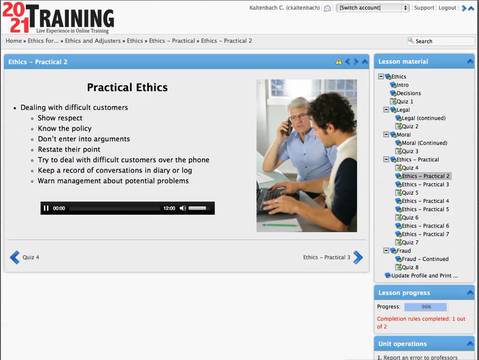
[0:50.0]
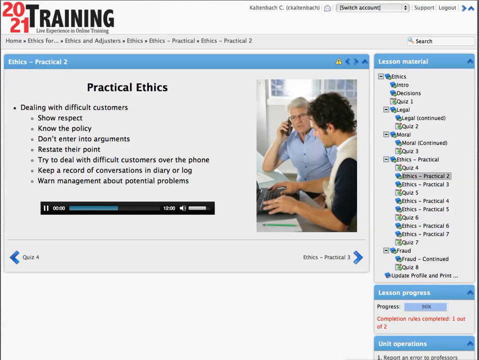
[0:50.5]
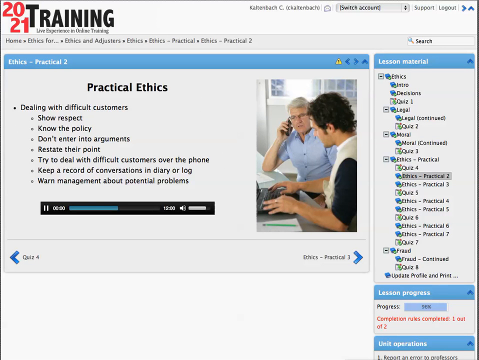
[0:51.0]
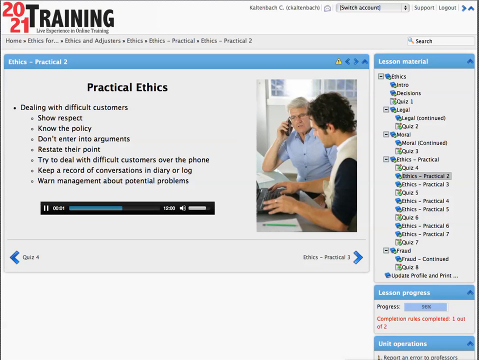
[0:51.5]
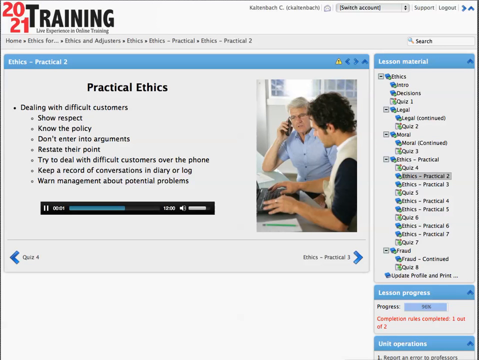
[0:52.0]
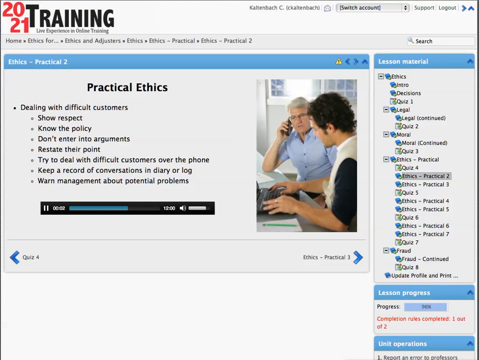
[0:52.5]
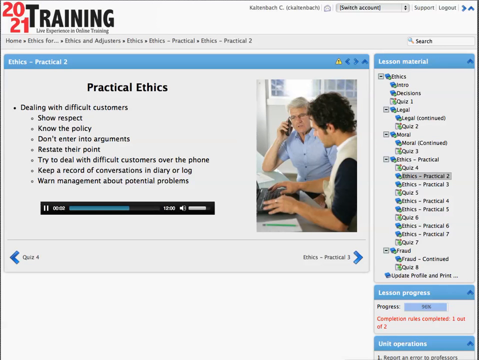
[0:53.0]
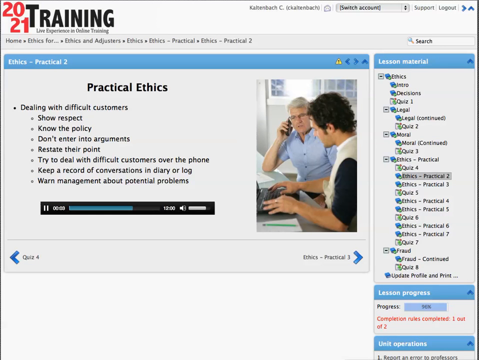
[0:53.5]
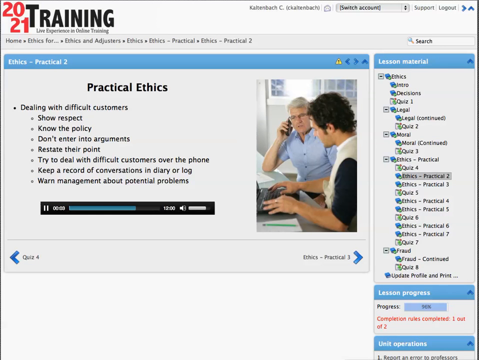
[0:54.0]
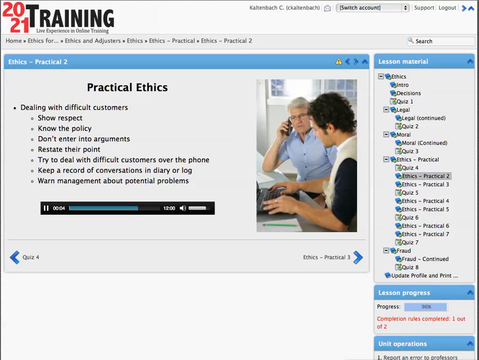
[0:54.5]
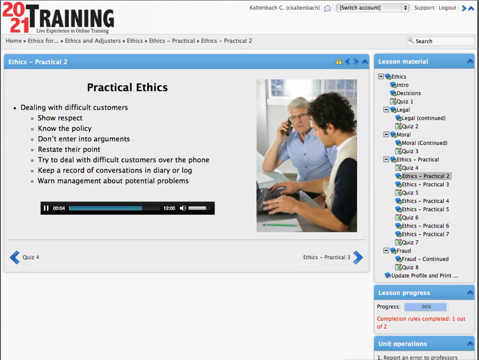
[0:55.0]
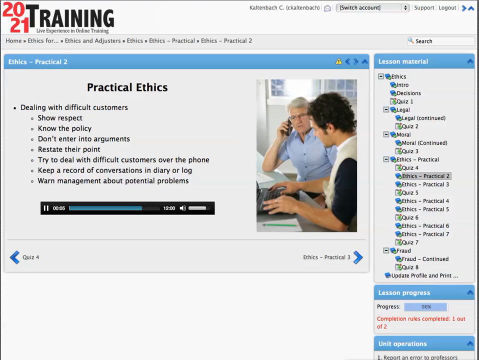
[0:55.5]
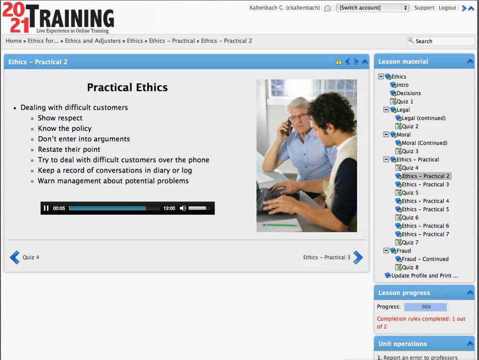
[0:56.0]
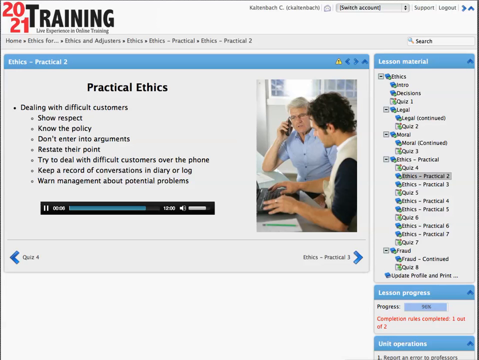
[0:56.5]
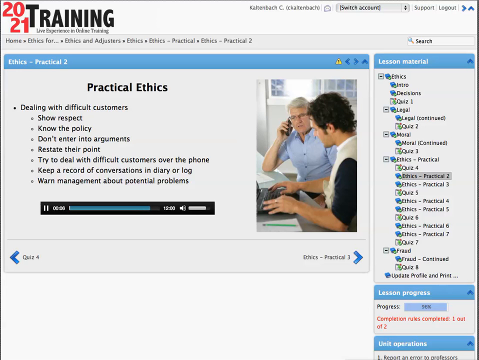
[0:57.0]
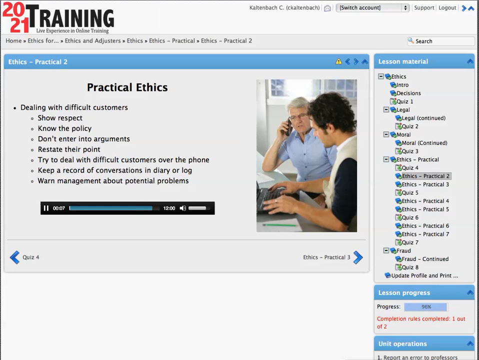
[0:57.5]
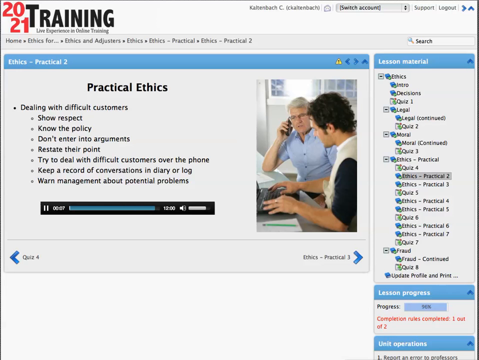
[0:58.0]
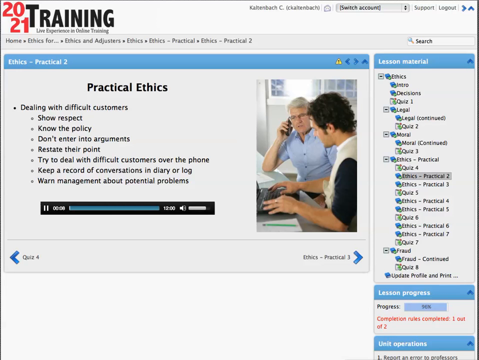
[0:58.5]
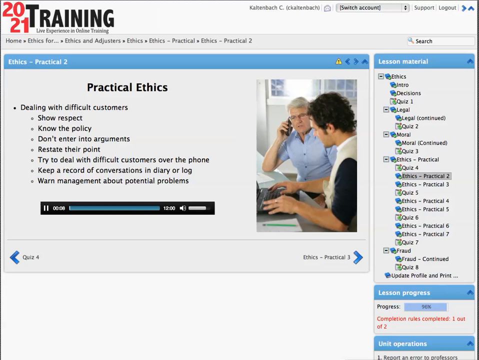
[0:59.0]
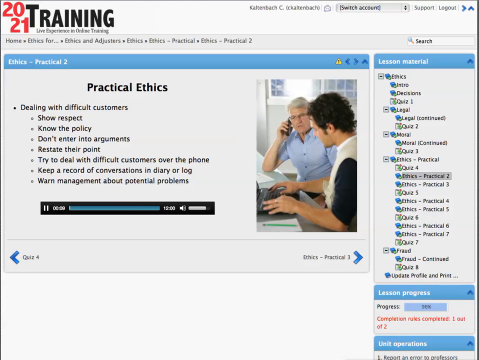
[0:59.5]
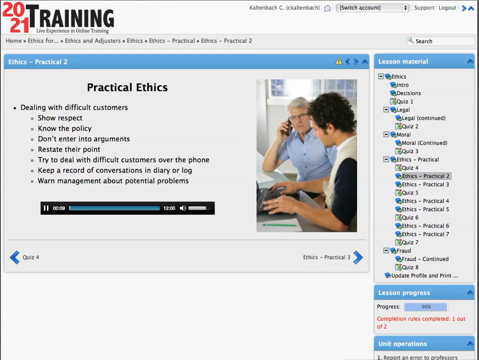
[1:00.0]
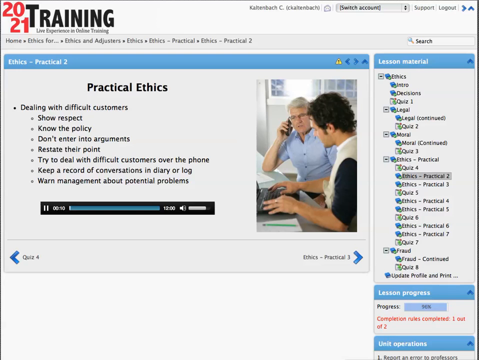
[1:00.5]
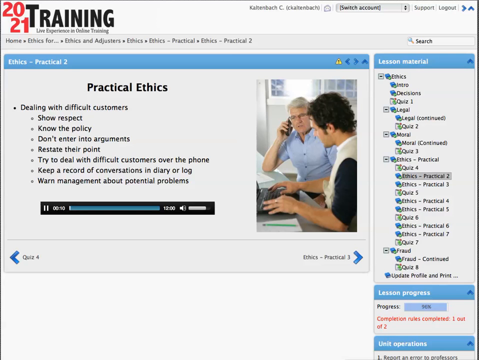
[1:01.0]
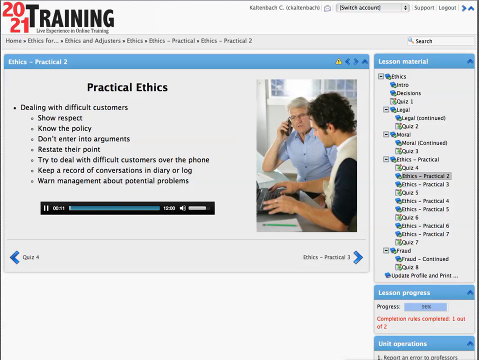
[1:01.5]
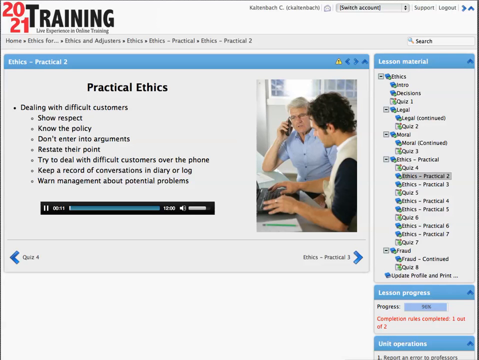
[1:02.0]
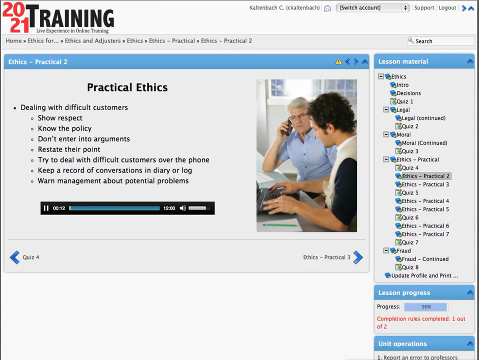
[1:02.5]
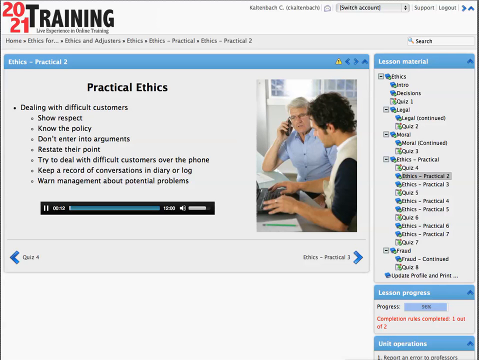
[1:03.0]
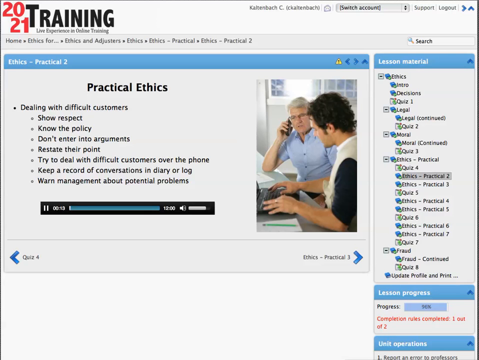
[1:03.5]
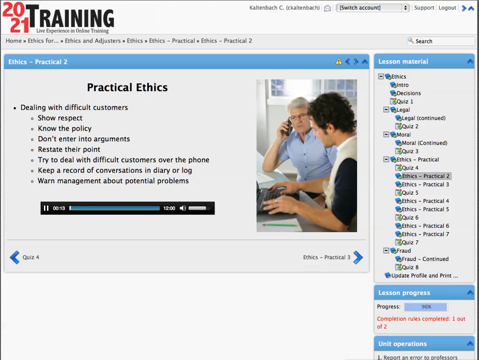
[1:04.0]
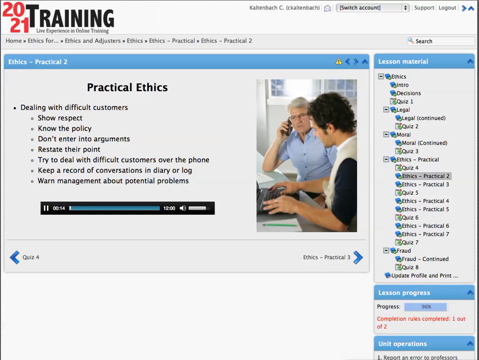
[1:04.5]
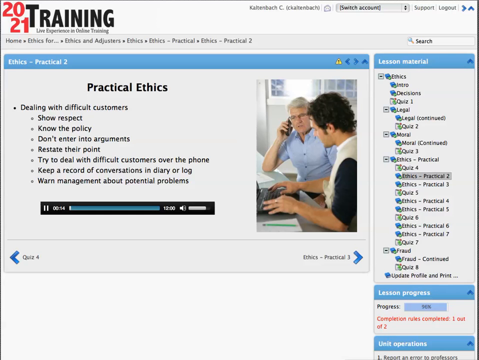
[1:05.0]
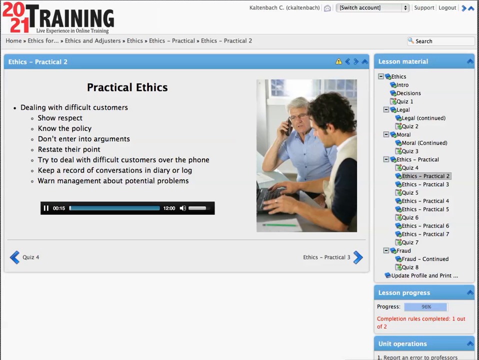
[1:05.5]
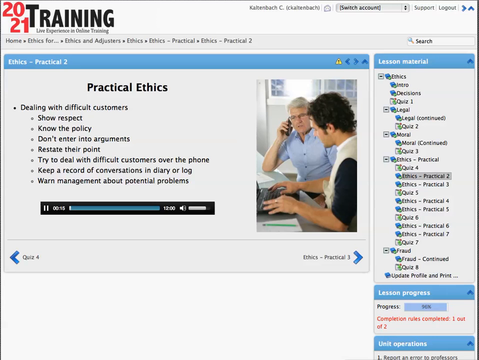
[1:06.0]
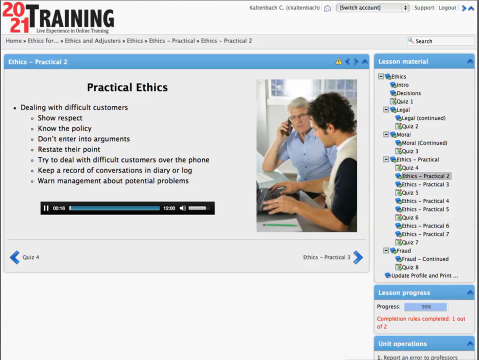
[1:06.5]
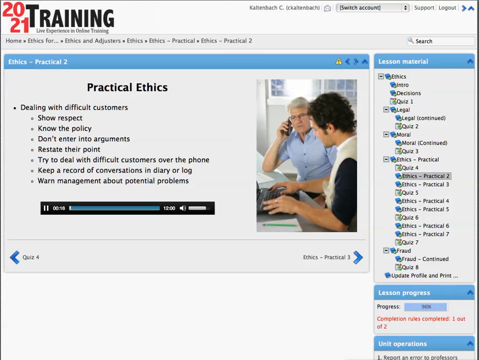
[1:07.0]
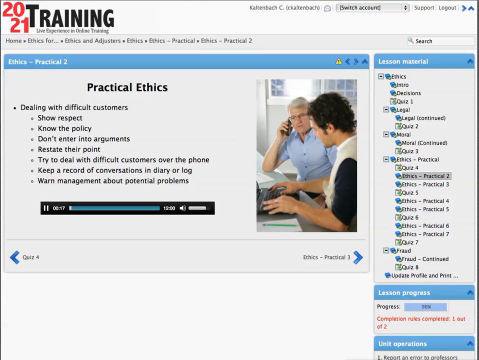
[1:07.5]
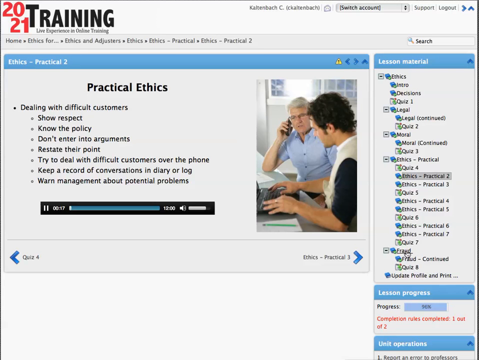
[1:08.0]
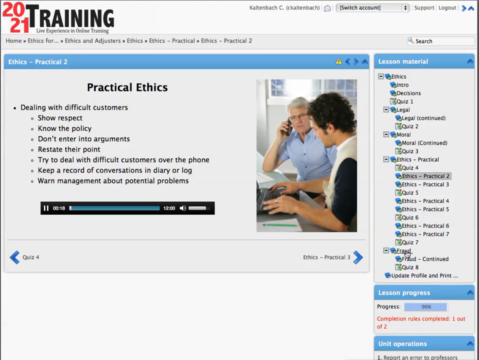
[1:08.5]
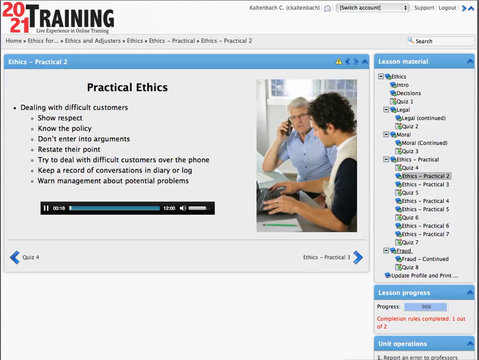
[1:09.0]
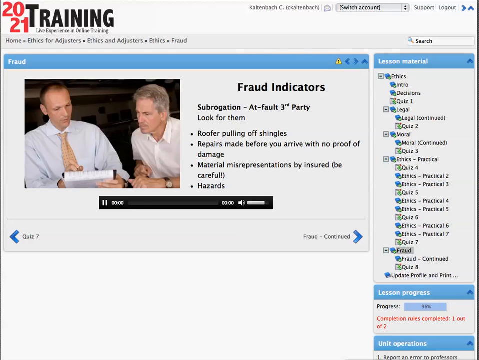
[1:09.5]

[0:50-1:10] The screen shows the title "Practical Ethics" with the main bullet point "Dealing with Difficult Customers". The sub-bullets below read: "show respect", "know the policy", "don't enter into arguments", "restate their point", "try to deal with difficult customers over the phone", "keep a record of conversations in diary or log", and "warn management about potential problems". Below the bullet points there is an audio recording that is 12 minutes long. The picture on the right-hand side shows two men: one holds a phone to his ear, wears a blue shirt, and looks to be in his late 50s; the other is typing on a laptop and looks to be in his 30s. Both appear to be in an office, seated at a table that has papers and a pencil on it.